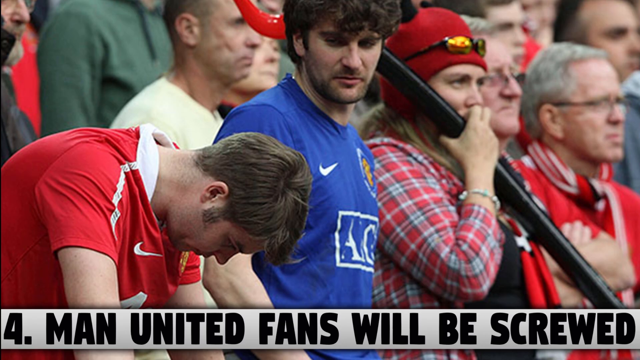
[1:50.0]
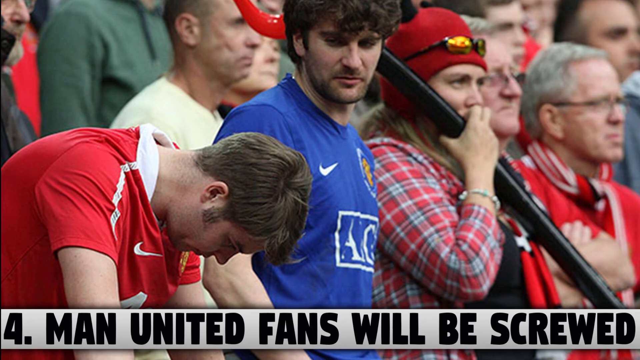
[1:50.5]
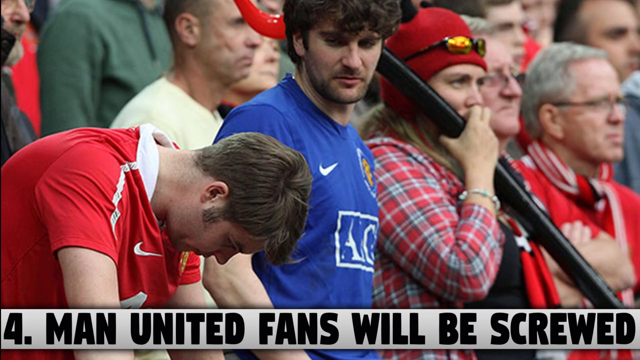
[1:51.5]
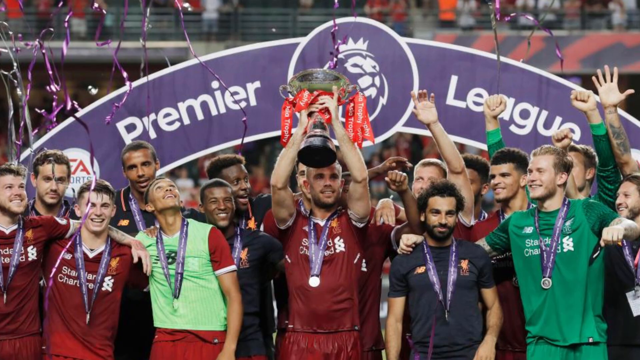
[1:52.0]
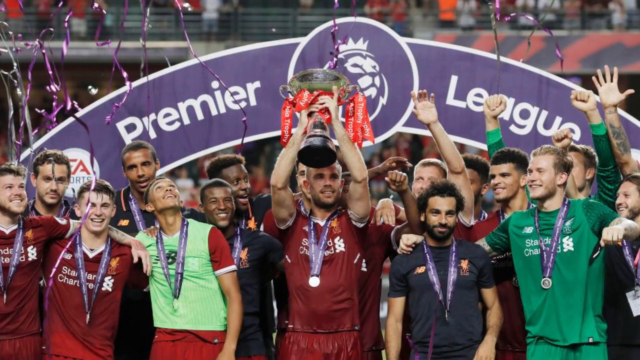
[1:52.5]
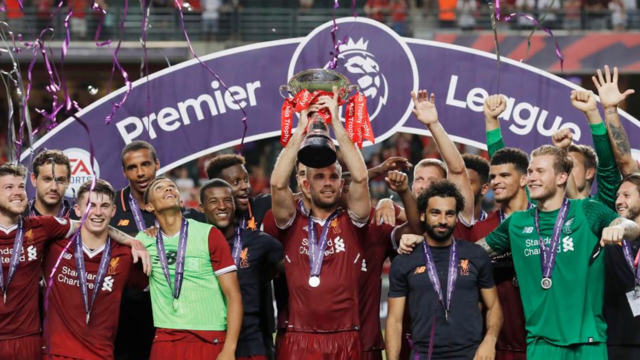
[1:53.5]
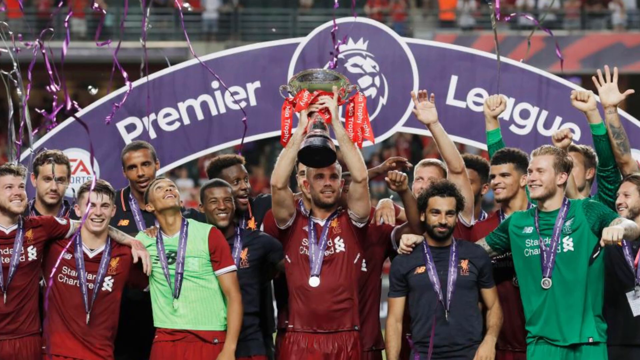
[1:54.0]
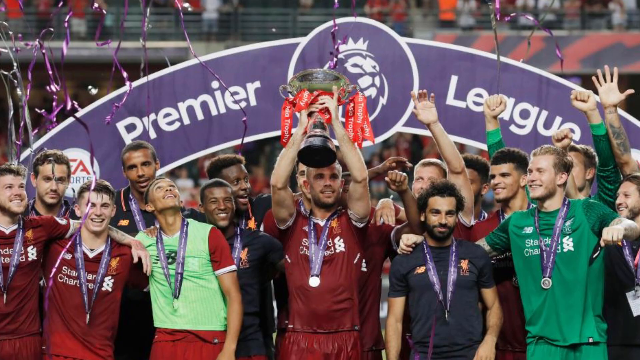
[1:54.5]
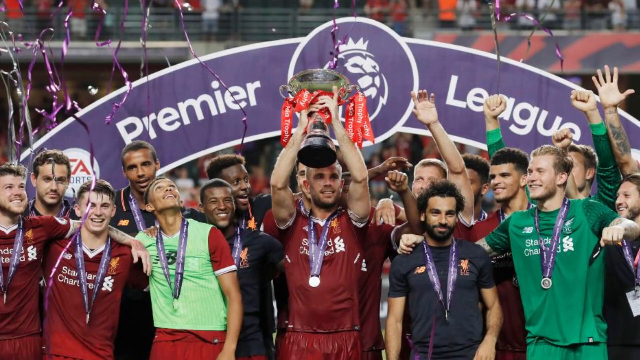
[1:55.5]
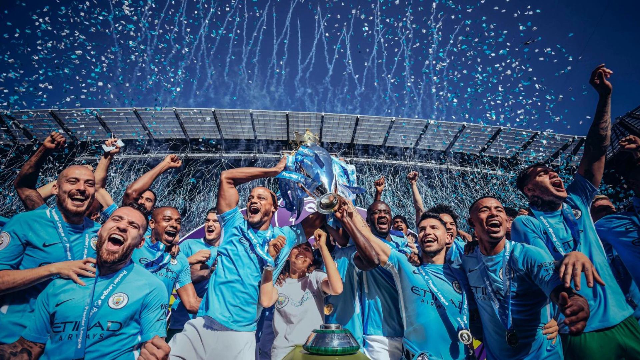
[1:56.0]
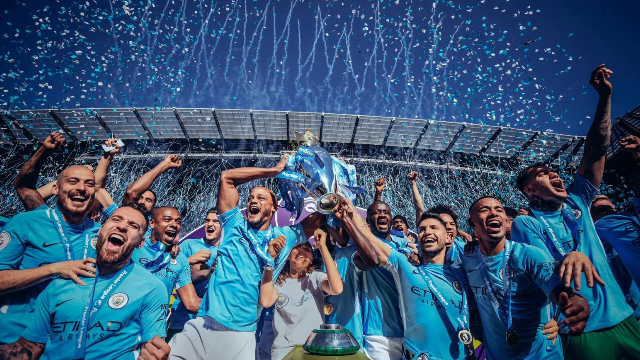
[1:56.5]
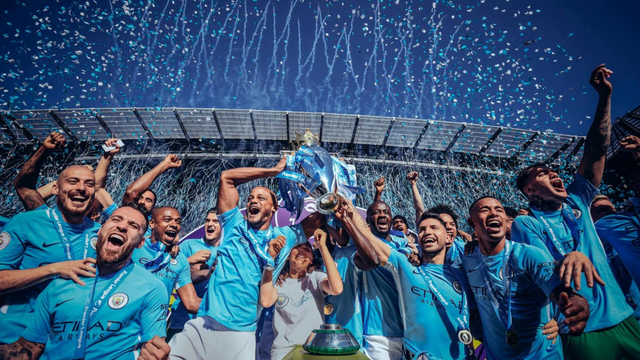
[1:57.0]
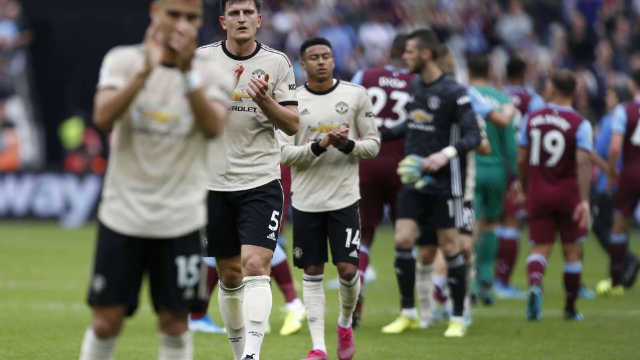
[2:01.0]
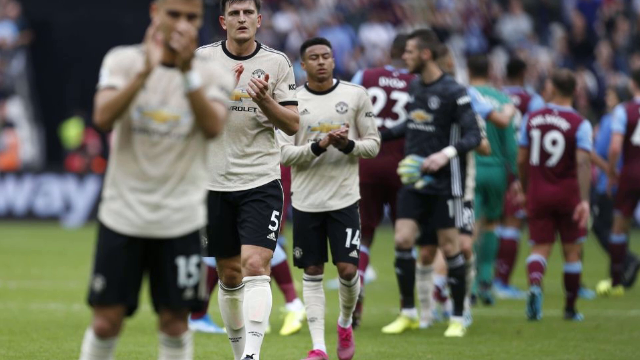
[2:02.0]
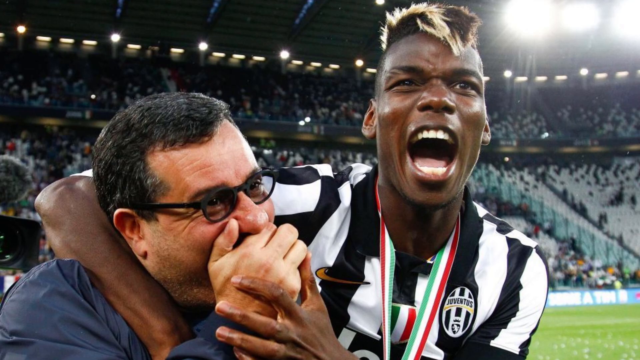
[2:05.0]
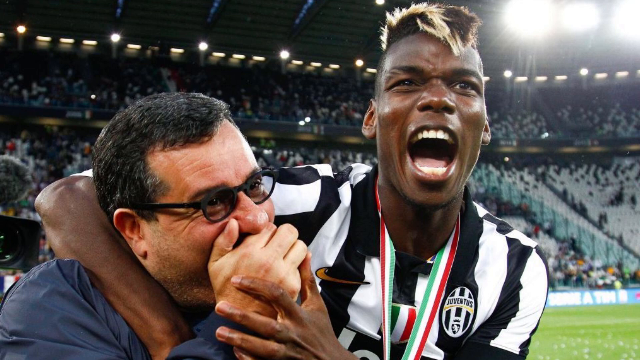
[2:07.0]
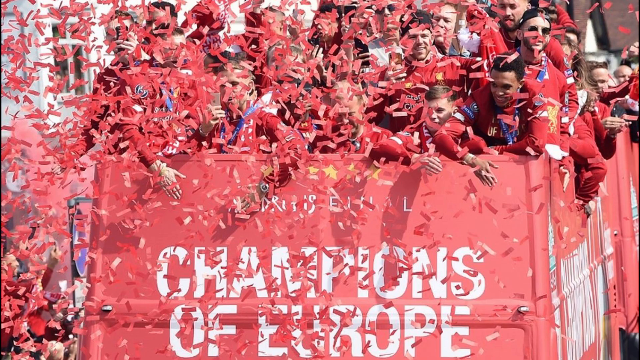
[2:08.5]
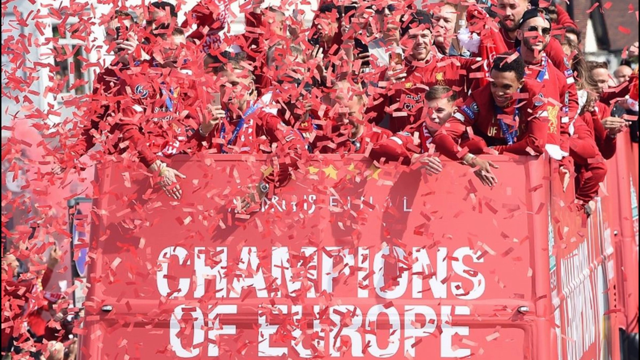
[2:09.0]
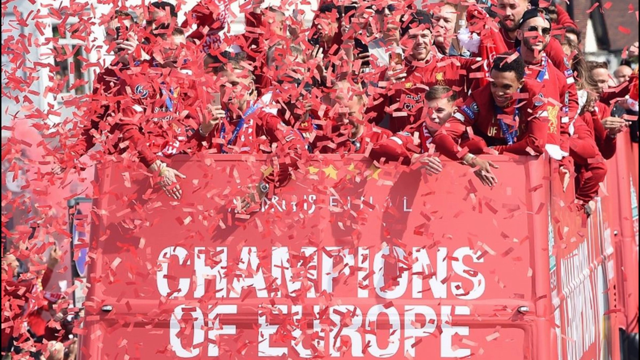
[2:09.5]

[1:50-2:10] Many people are shown; most look like spectators, but one wears a jersey. That man, in the bottom left corner, wears a red jersey with white trim and a Nike logo; he has kind of sandy, dishwater blonde hair and is hunched over, looking down at the ground. A man with dark hair stands next to him in a blue short-sleeved shirt that also has a Nike logo and some white text, looking at the hunched man. Both men are Caucasian. Next to the dark-haired man in the blue shirt is a woman wearing what appears to be a sock hat, with glasses that look like shades of some sort resting on her forehead on top of the sock hat. She wears a red plaid shirt, holds something black in her arm or hand, and looks off into the distance. At the bottom of the screen, black text reads "four Man United fans will be screwed".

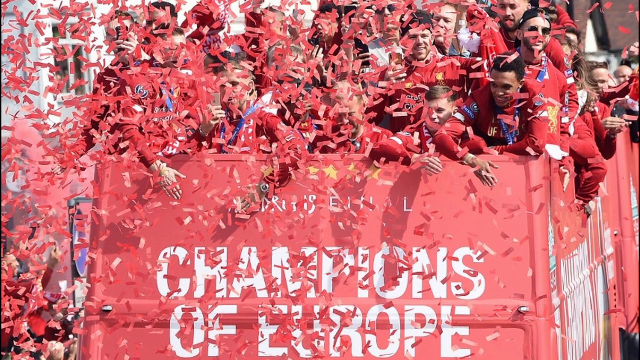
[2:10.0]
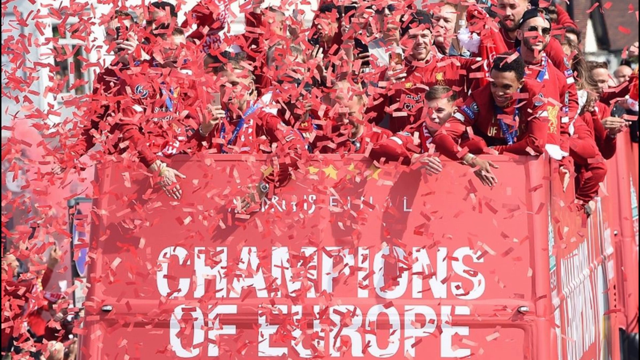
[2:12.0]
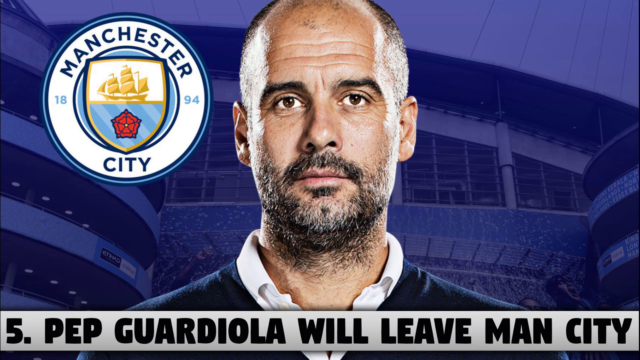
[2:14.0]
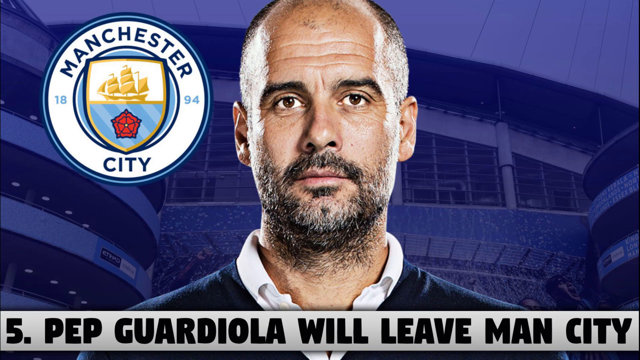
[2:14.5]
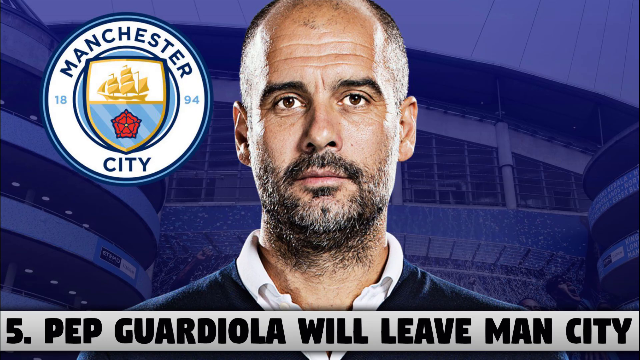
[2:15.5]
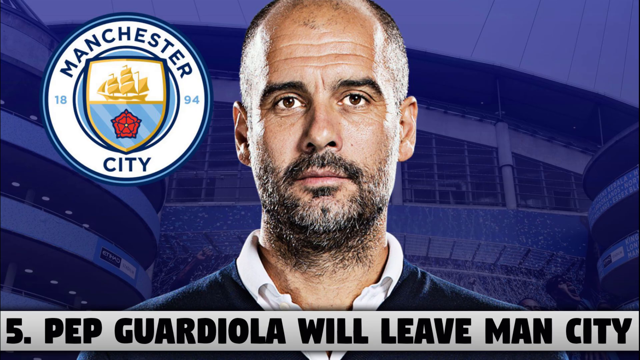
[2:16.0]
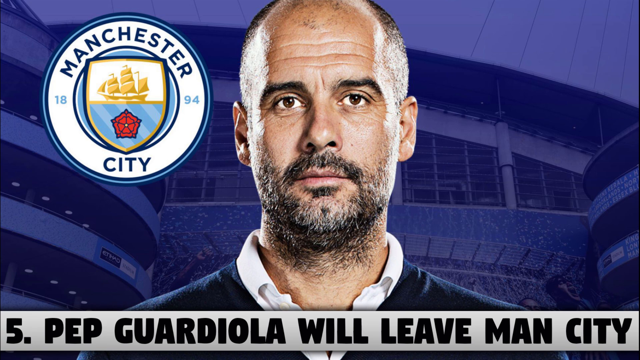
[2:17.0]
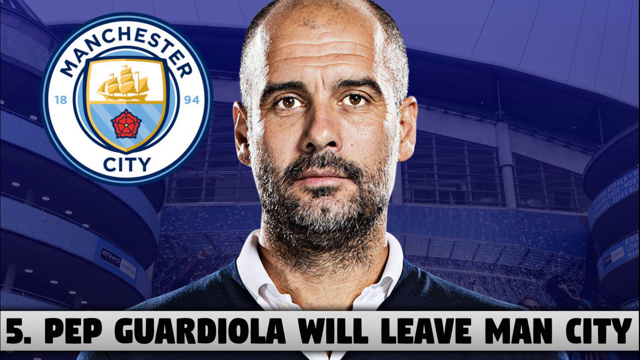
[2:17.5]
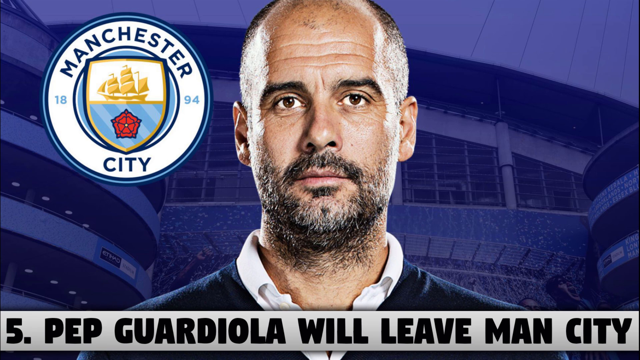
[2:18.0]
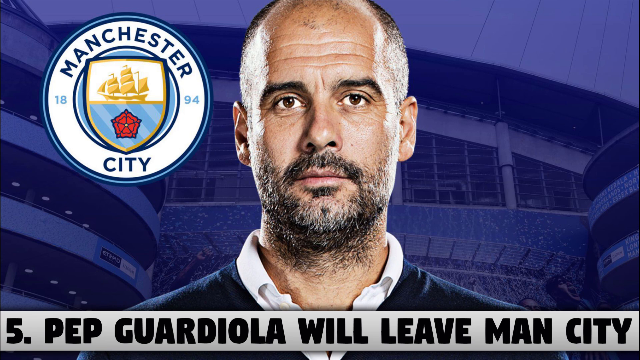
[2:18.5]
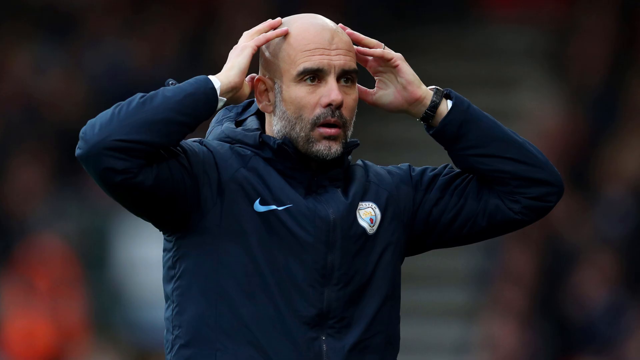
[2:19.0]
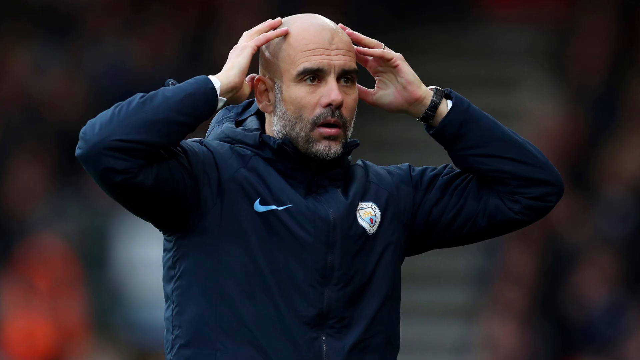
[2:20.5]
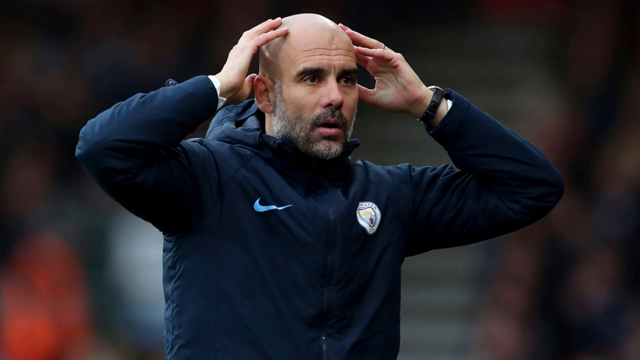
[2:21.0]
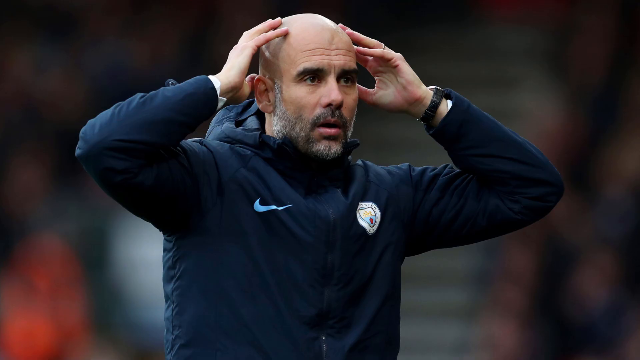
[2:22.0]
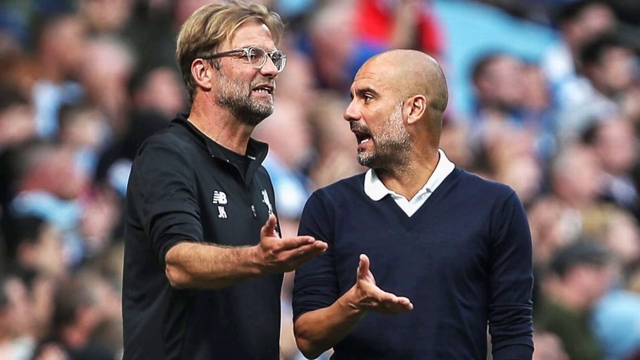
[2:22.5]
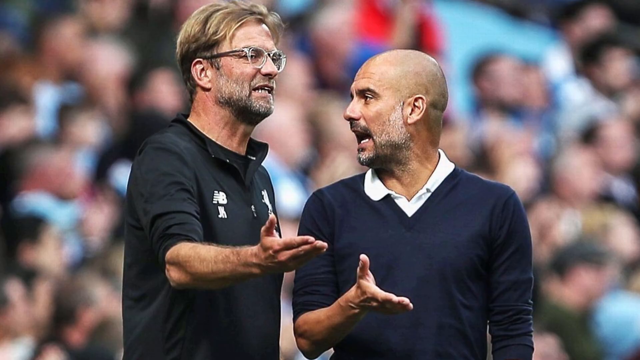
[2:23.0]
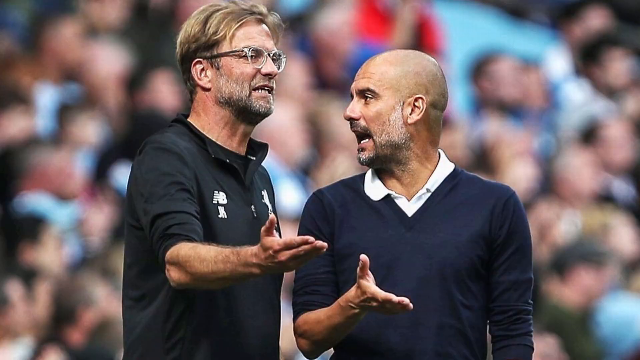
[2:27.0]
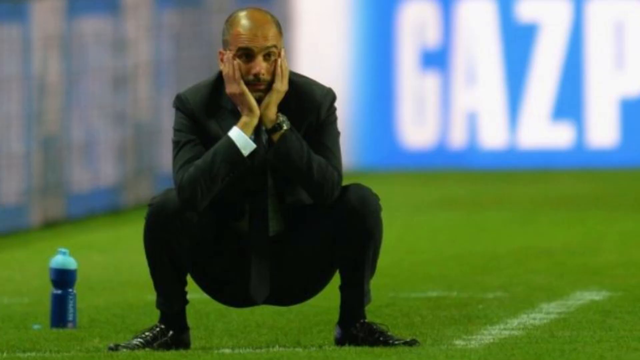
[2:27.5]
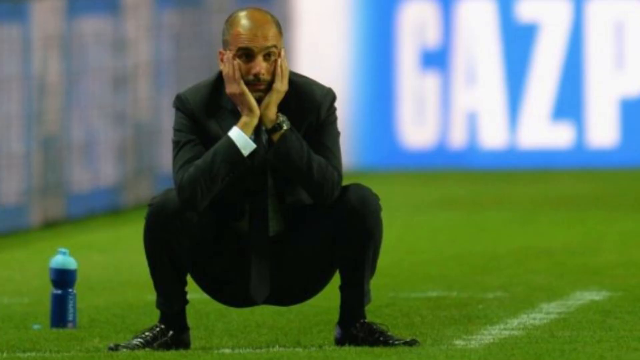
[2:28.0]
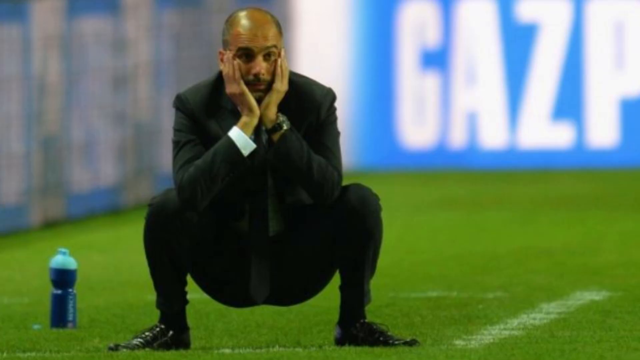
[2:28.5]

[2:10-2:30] What might be a parade is shown: a group of people, maybe inside some kind of vehicle, all wearing red tops, with some kind of red confetti in front of them. At the bottom front of the vehicle is text beginning "champions of", with the rest not legible. The scene changes to a man with olive-colored skin and dark, receding, very short hair like a buzz cut, with a decent beard that is mostly dark with some gray in it. At the top left of the screen is a circular emblem that says "Manchester City", with a little gold ship on water in the middle and a shield in the center; it says "1894", with "18" on the left of the circle and "94" on the right. At the bottom of the screen, black text reads "5 PEG GUARDIOLA will leave Man City".